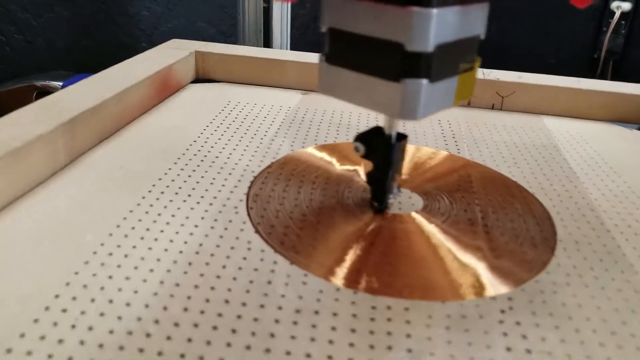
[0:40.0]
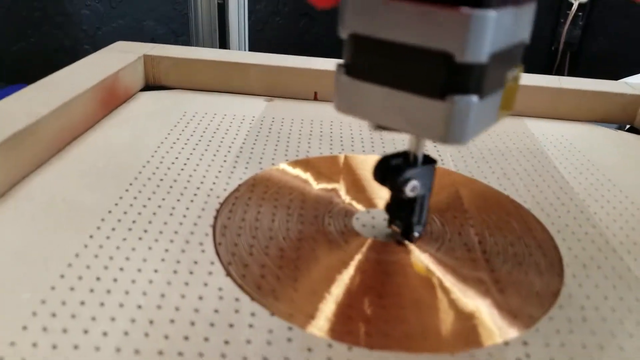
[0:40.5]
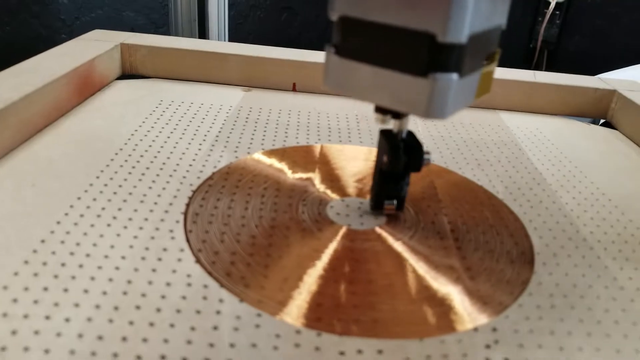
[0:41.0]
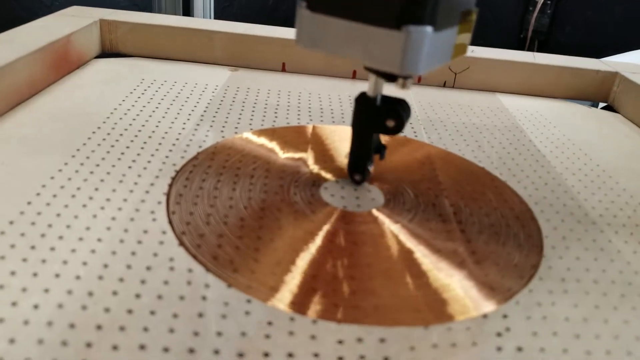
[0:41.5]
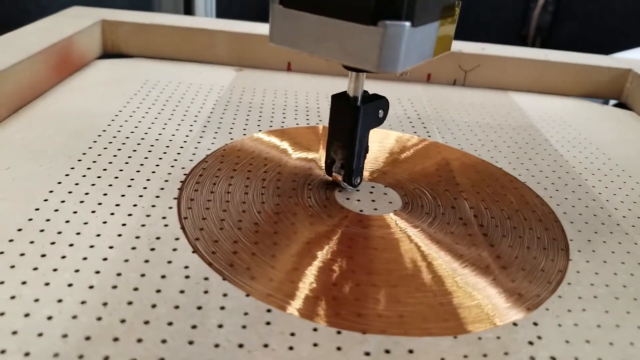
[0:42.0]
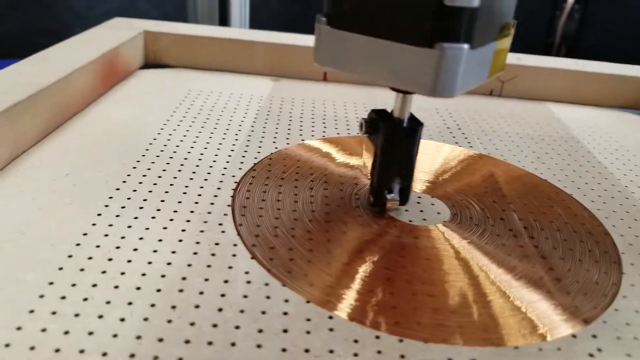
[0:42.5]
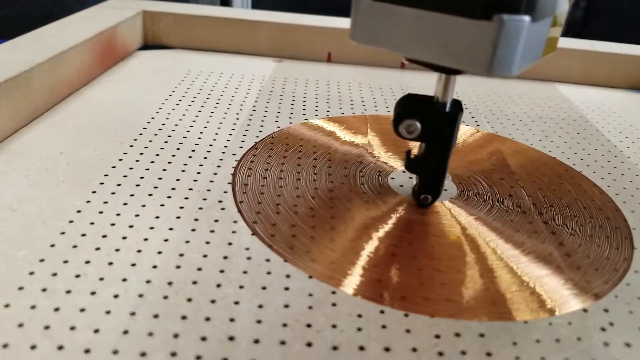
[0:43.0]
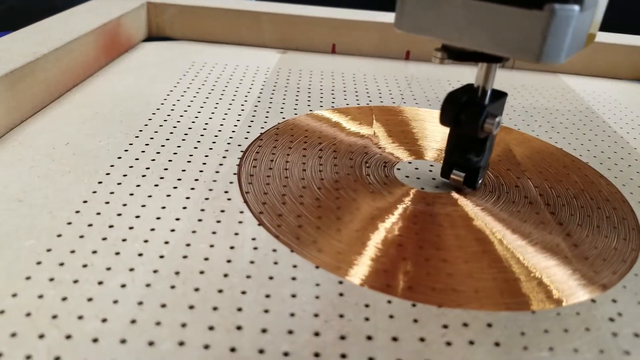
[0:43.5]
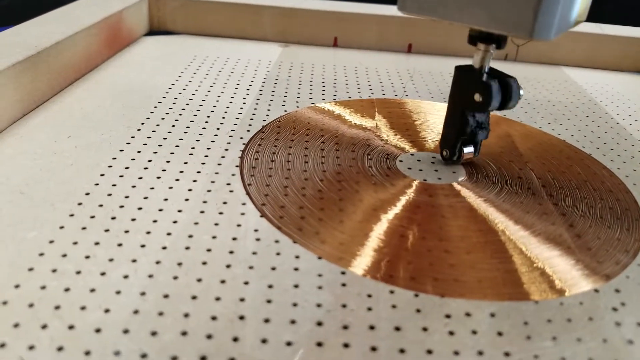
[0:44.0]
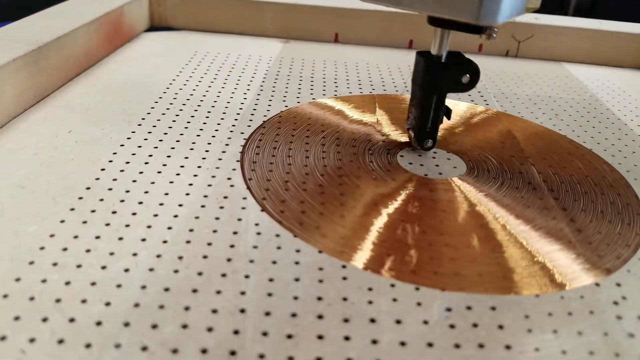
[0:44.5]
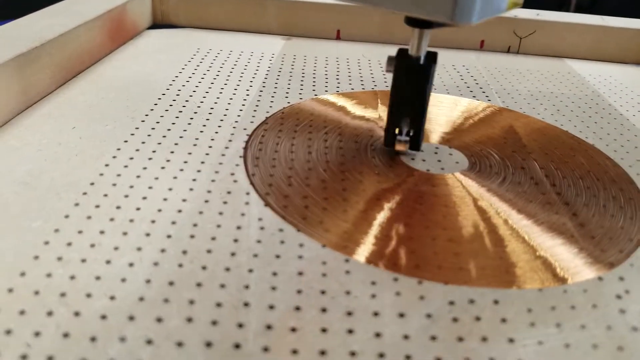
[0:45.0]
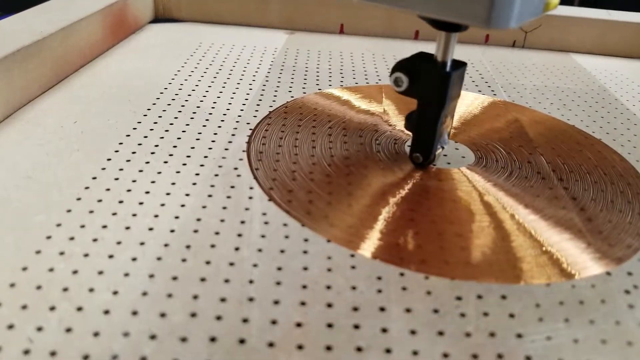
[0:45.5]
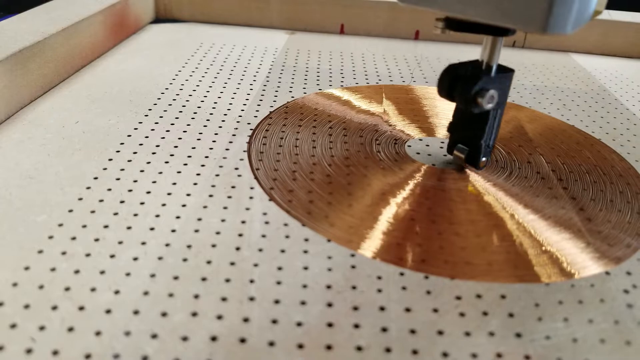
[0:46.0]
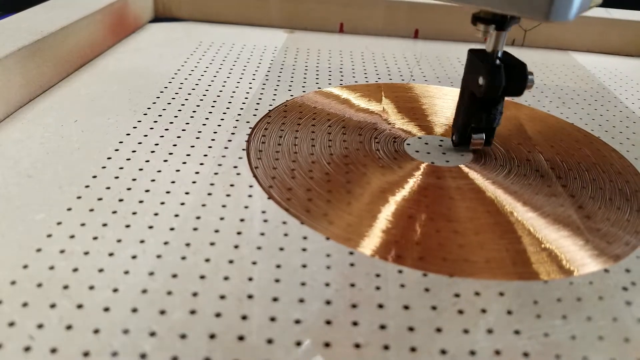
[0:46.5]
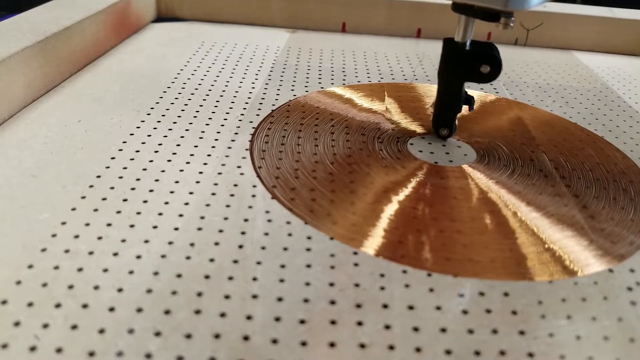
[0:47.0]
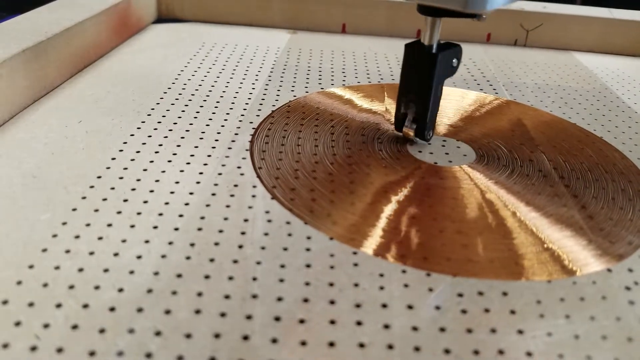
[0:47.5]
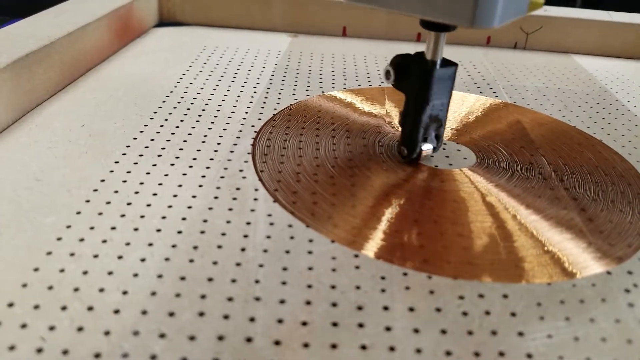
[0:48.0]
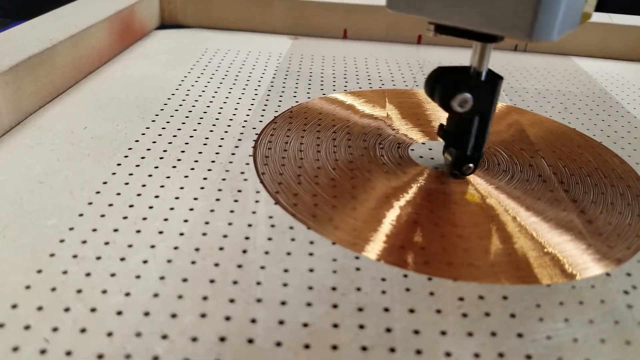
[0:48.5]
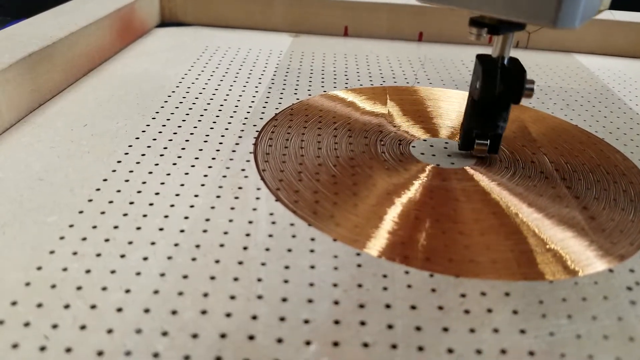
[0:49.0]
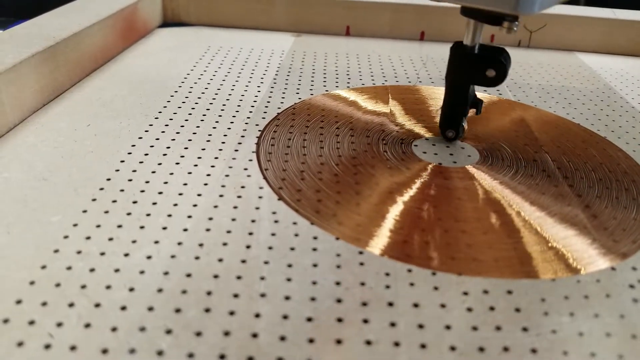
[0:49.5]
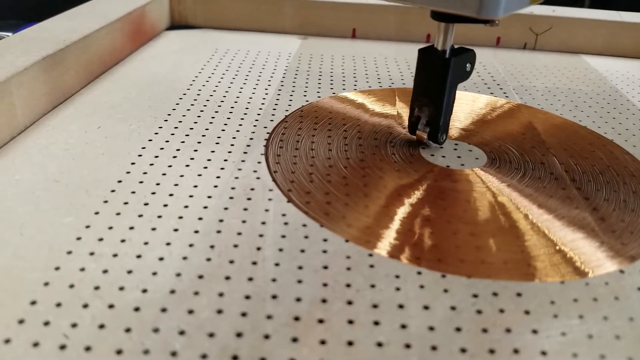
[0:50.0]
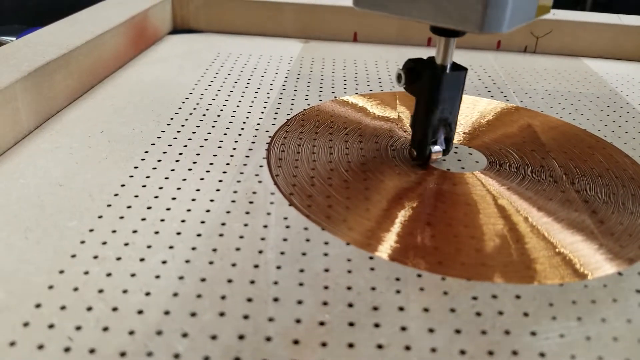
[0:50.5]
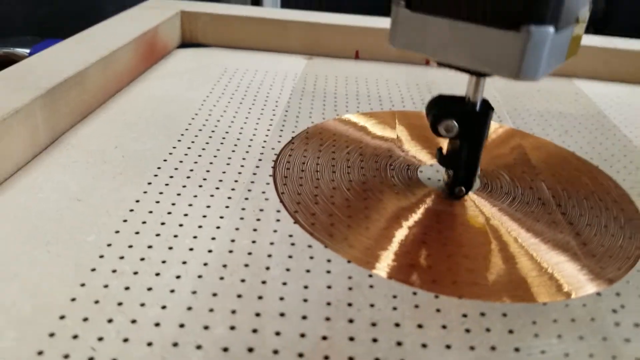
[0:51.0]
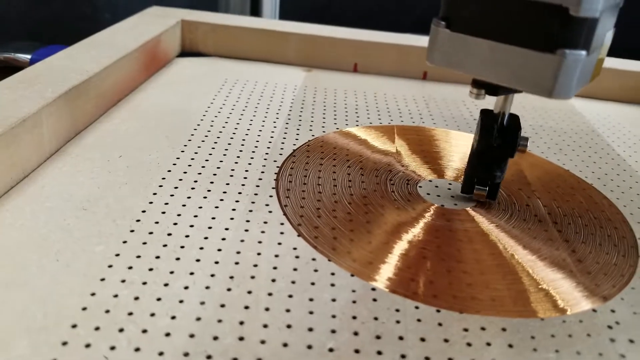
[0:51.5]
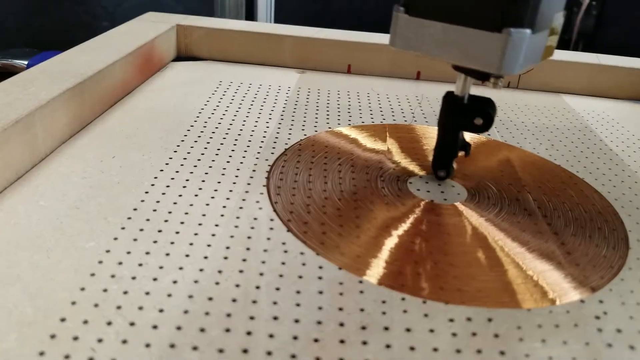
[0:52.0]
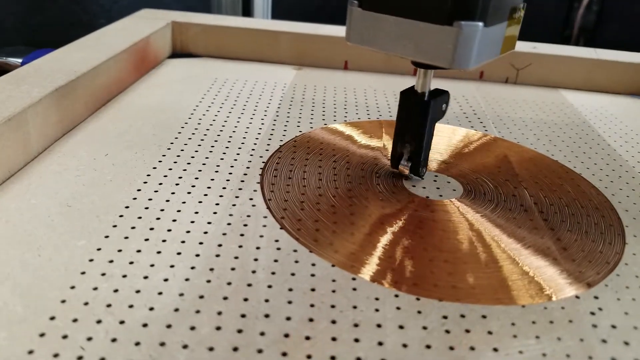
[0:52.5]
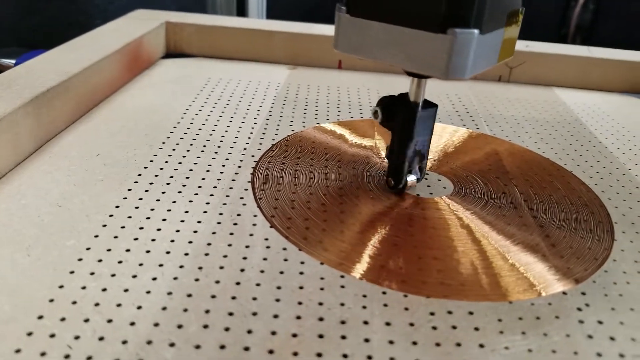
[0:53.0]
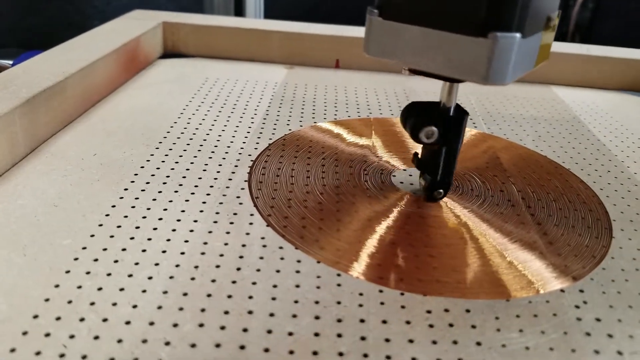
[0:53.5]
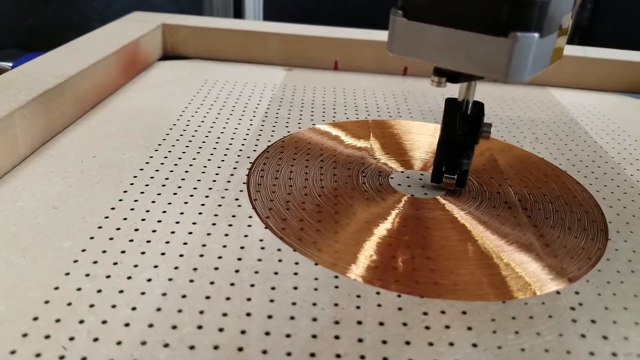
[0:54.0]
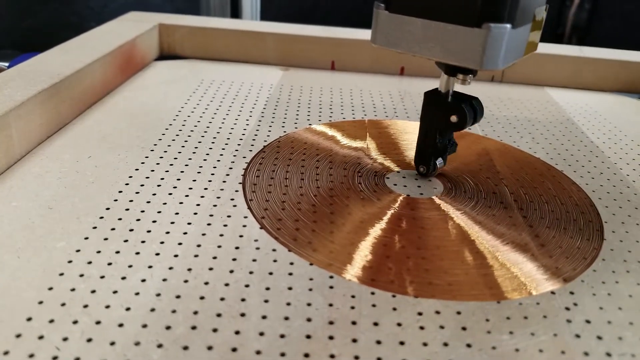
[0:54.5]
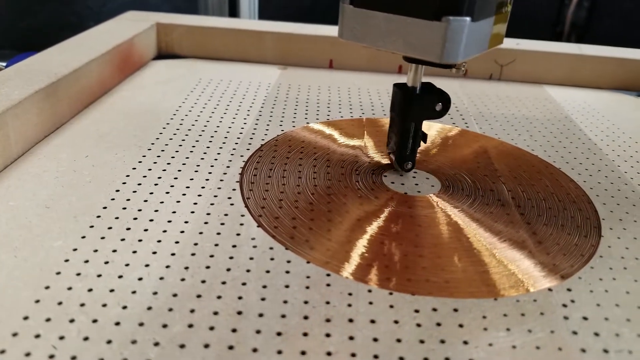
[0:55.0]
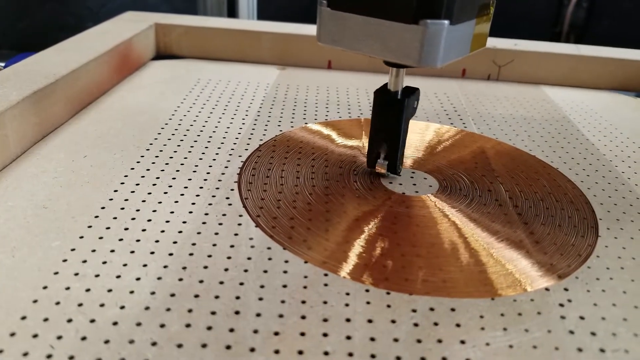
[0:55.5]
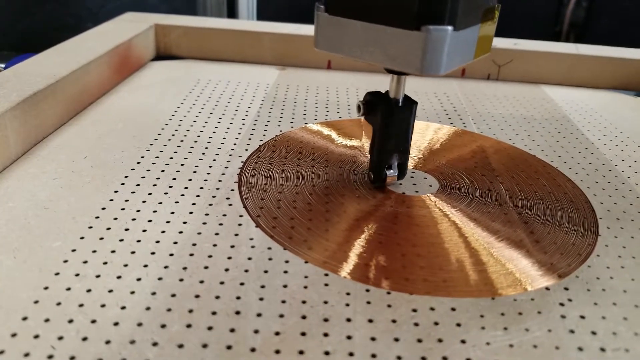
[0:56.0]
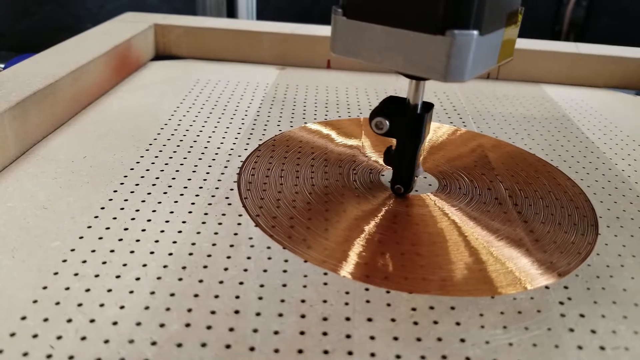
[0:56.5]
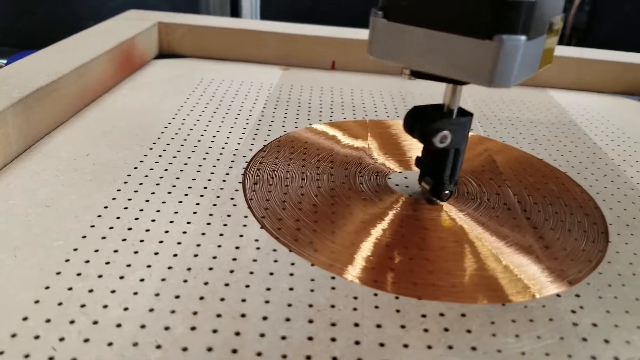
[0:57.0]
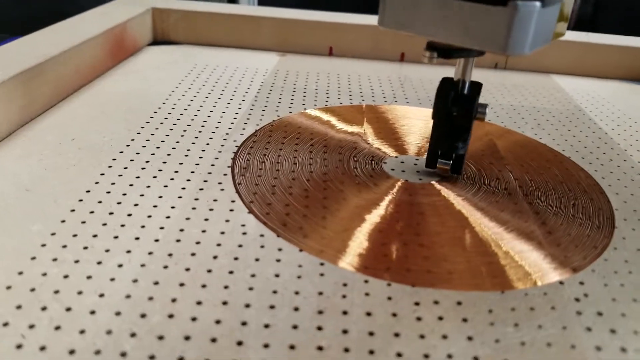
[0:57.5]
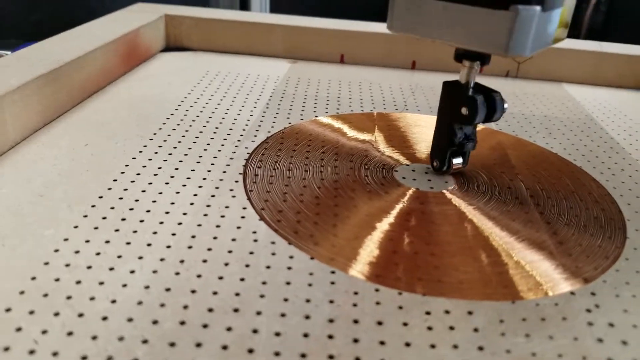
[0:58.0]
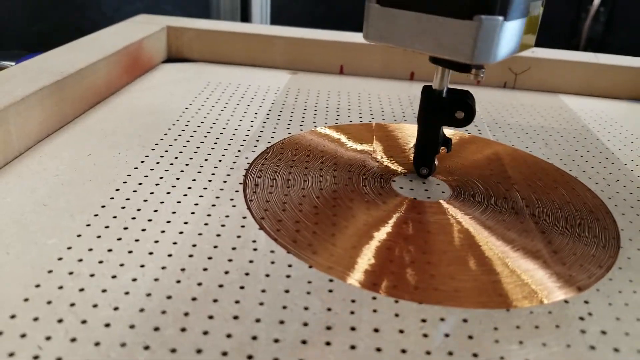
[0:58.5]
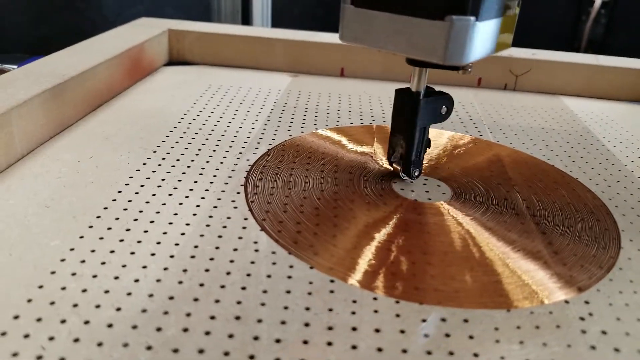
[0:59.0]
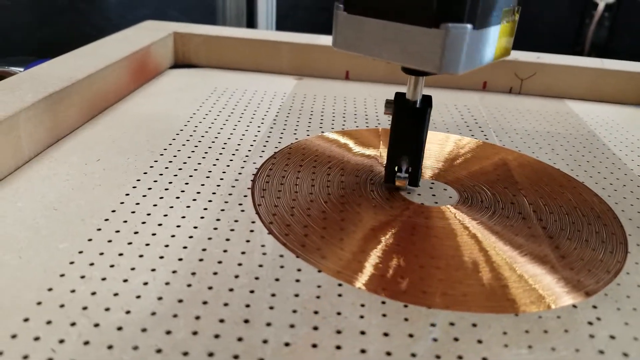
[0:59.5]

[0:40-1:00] A close-up, zoomed-in shot shows the tip of the machine making circular motions. The camera is unsteady, with some slight jerking, and it keeps moving in an untidy, inconsistent way. The machine continues to make the same motion. Mostly only the surface of the table can be seen, with little of the surrounding area or other parts of the machine. The view goes from zoomed in to zoomed out a little, then back to zoomed in, focusing on the tip of the machine making circular motions on the gold area of the table. There is just one machine, and the only part of it visible is the bottom part. The reflection of the machine appears on the circular gold part.